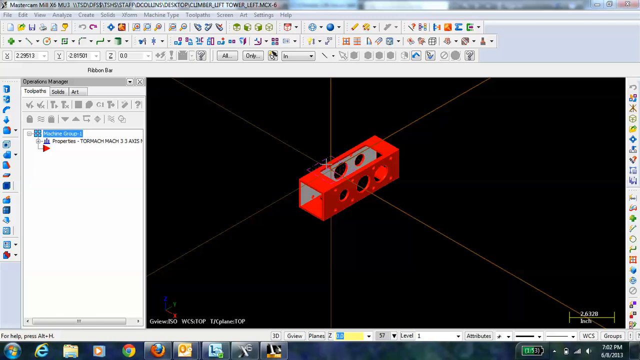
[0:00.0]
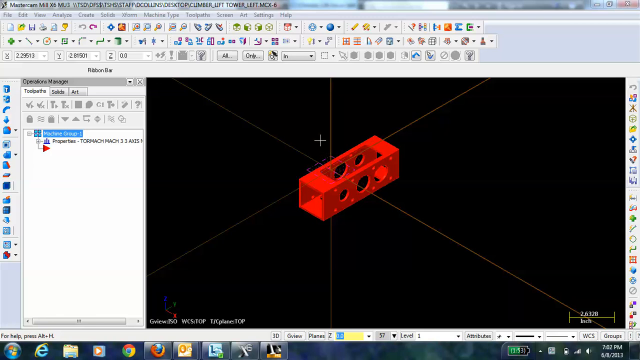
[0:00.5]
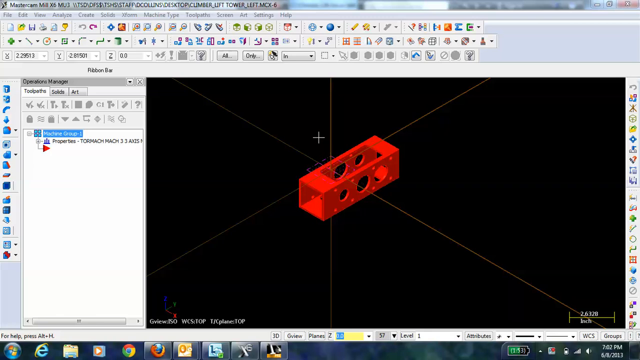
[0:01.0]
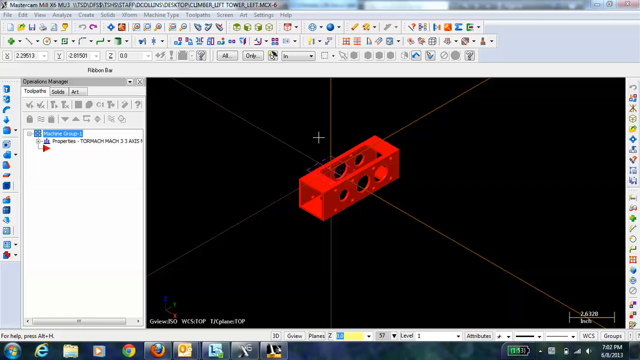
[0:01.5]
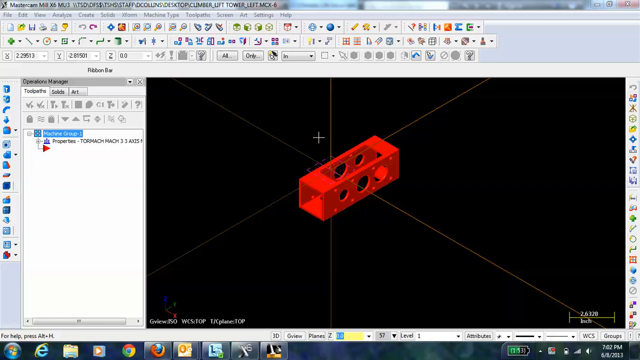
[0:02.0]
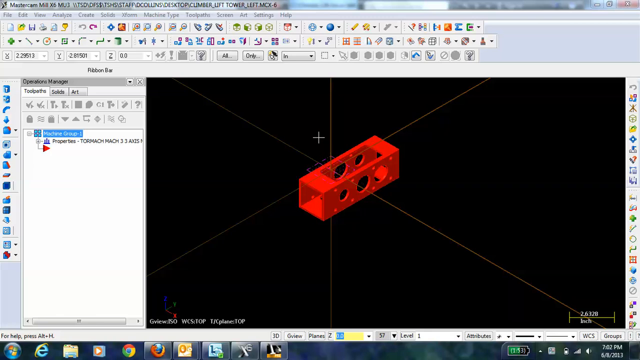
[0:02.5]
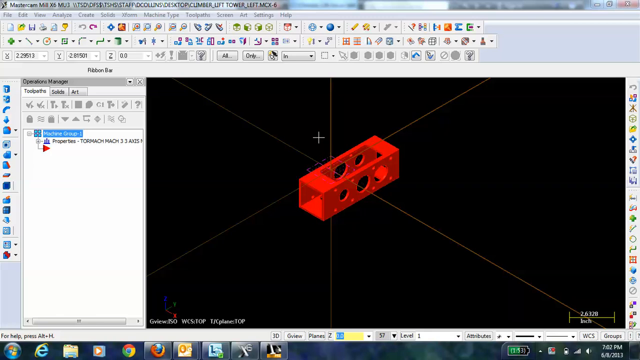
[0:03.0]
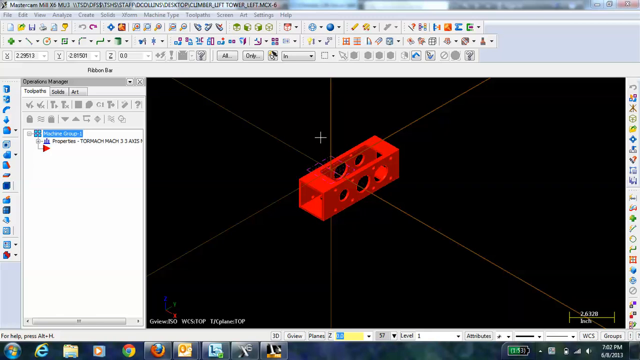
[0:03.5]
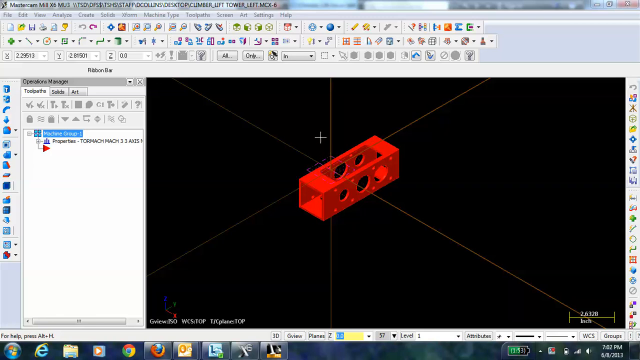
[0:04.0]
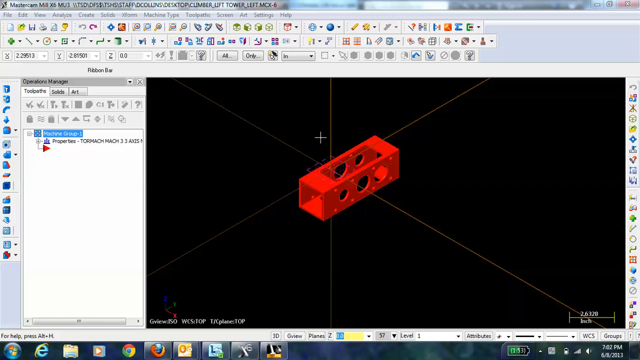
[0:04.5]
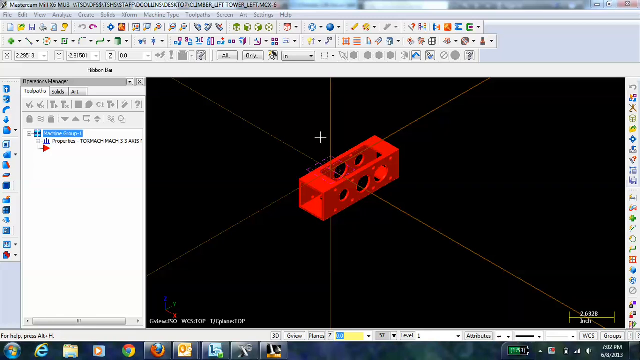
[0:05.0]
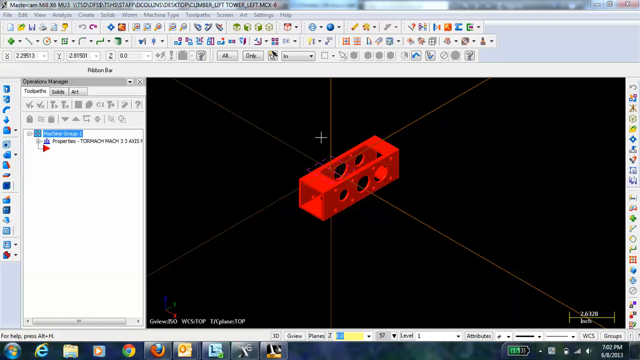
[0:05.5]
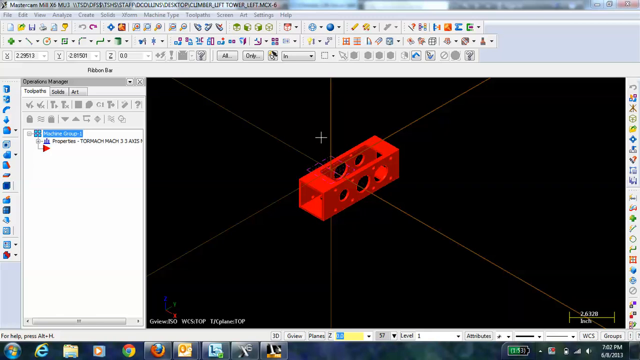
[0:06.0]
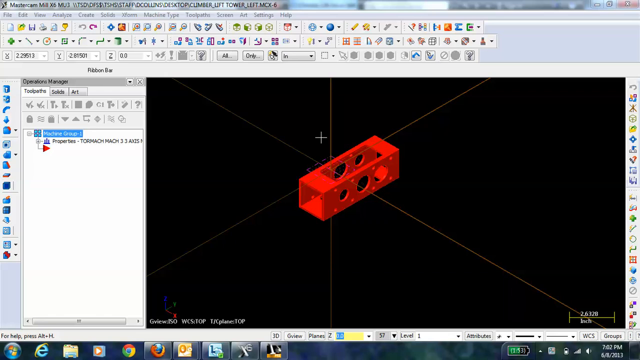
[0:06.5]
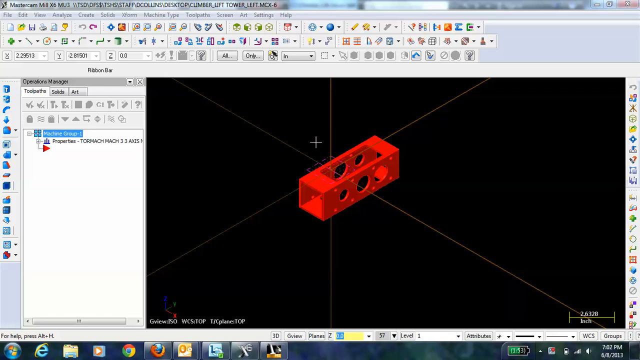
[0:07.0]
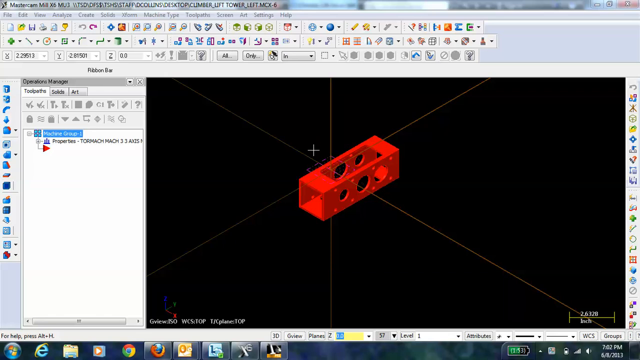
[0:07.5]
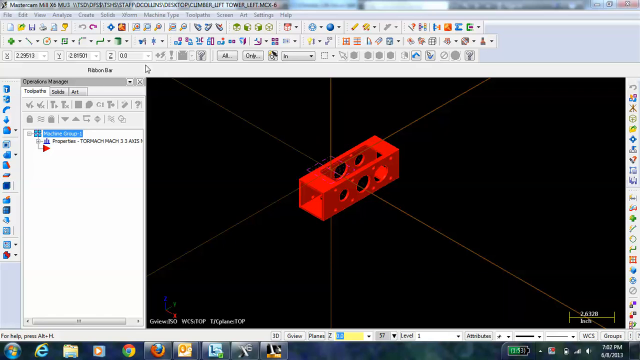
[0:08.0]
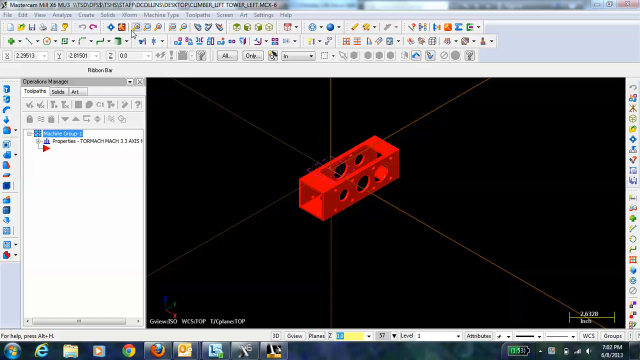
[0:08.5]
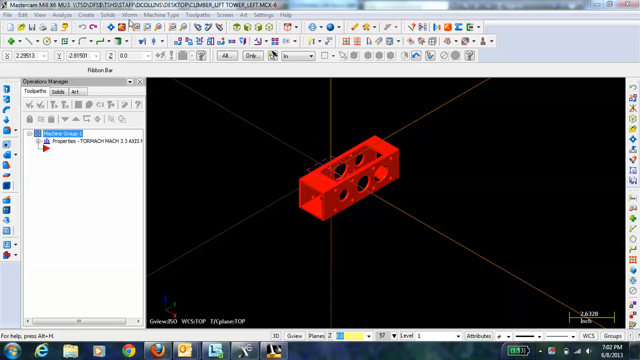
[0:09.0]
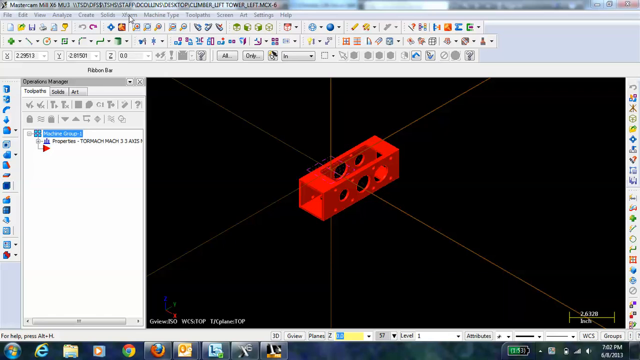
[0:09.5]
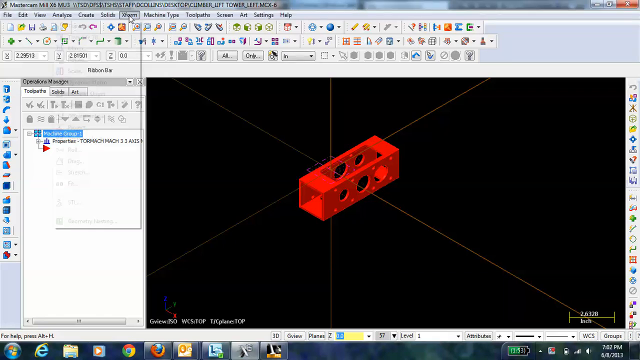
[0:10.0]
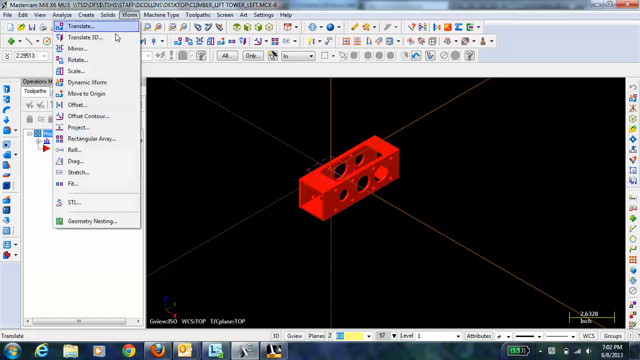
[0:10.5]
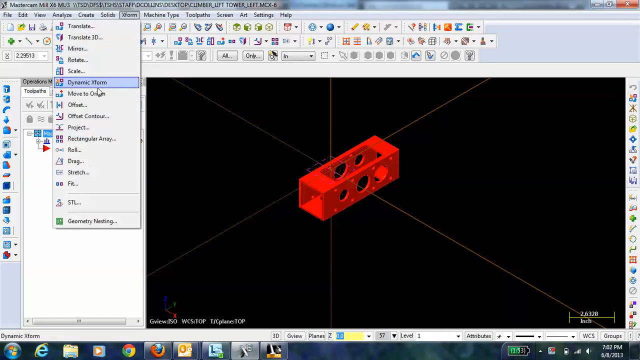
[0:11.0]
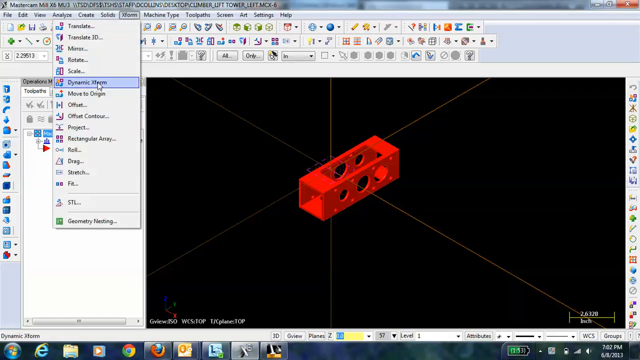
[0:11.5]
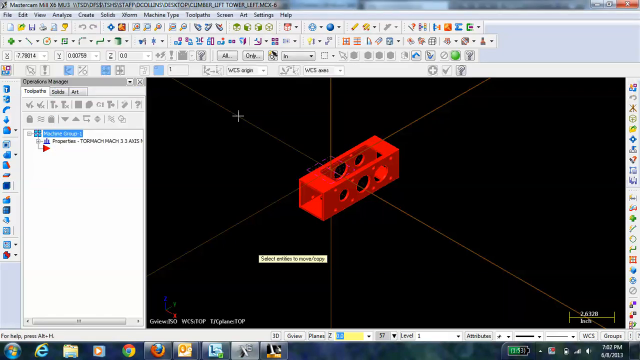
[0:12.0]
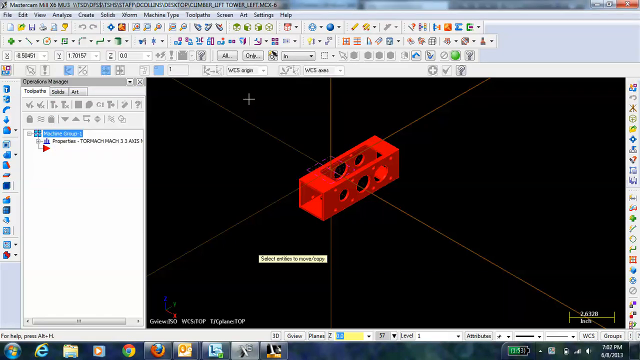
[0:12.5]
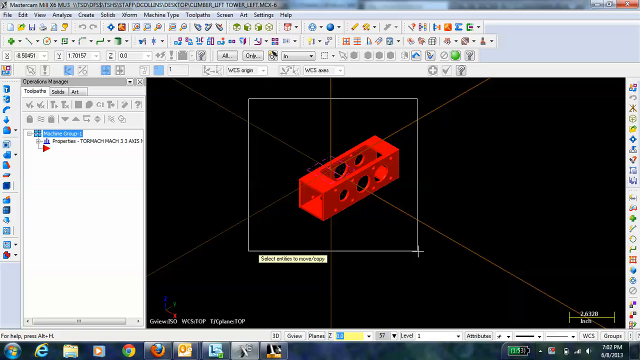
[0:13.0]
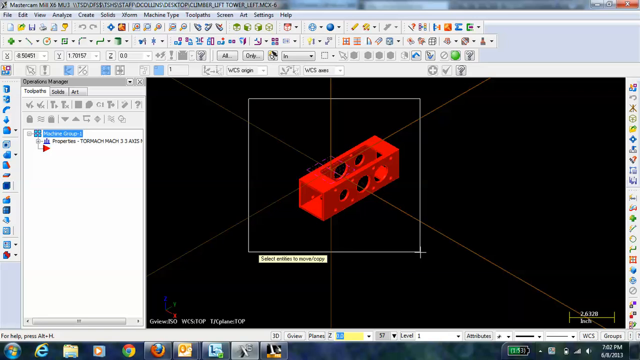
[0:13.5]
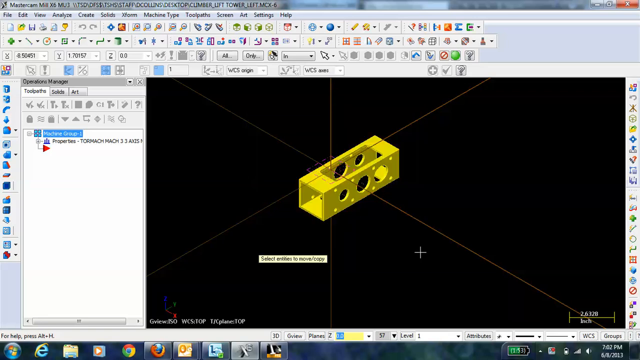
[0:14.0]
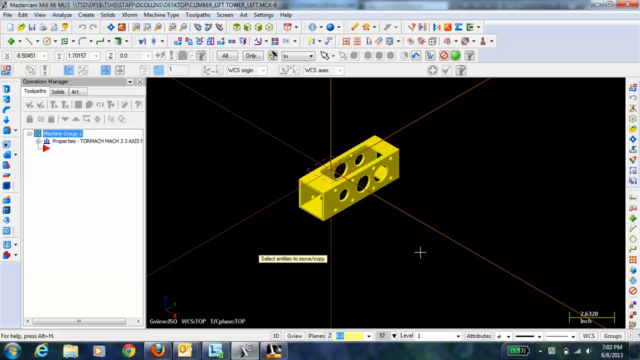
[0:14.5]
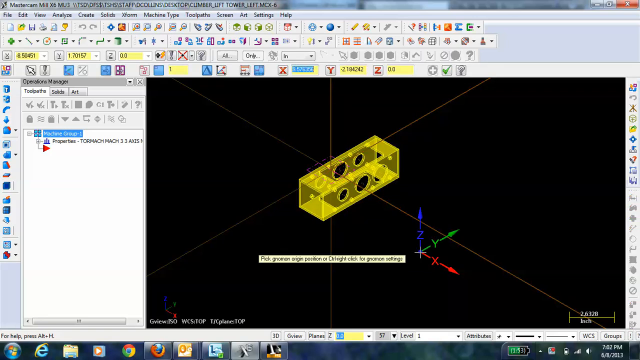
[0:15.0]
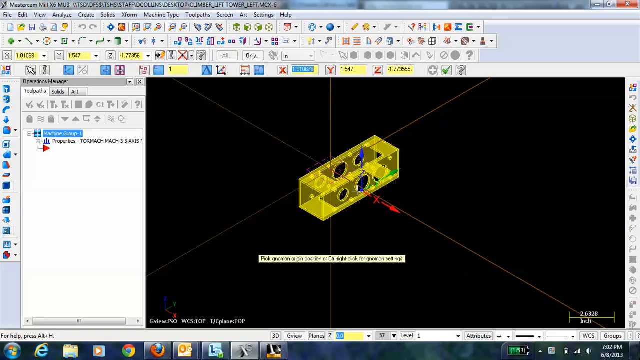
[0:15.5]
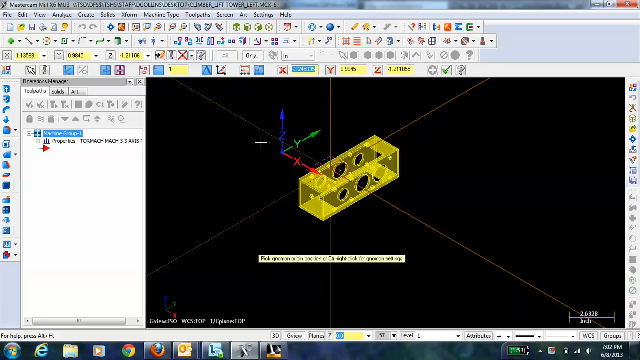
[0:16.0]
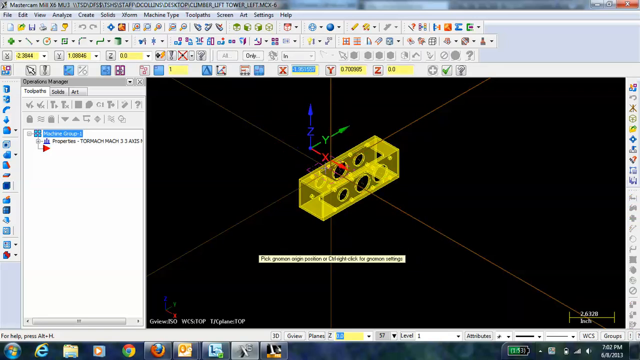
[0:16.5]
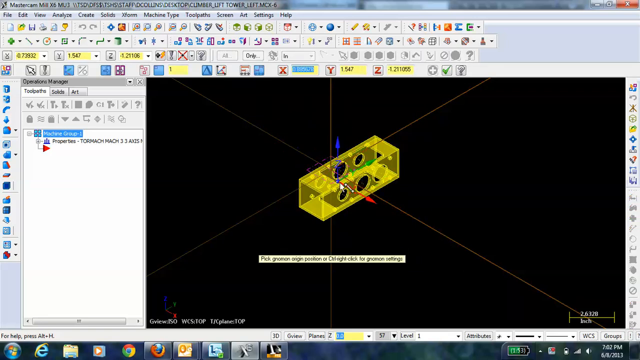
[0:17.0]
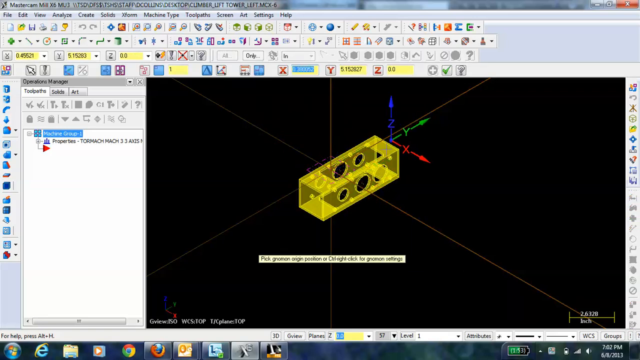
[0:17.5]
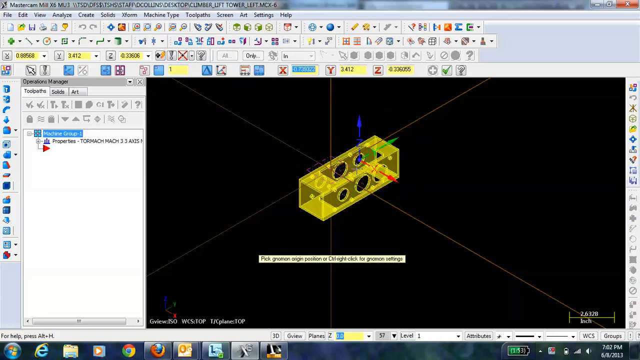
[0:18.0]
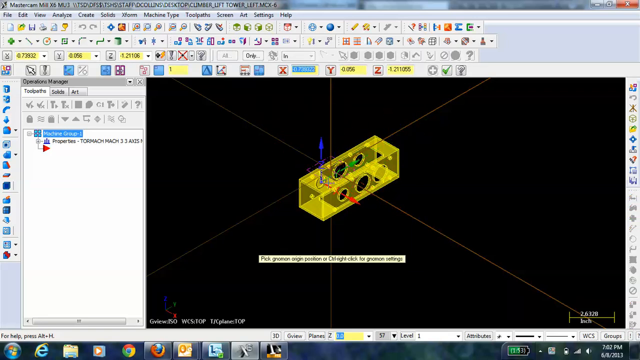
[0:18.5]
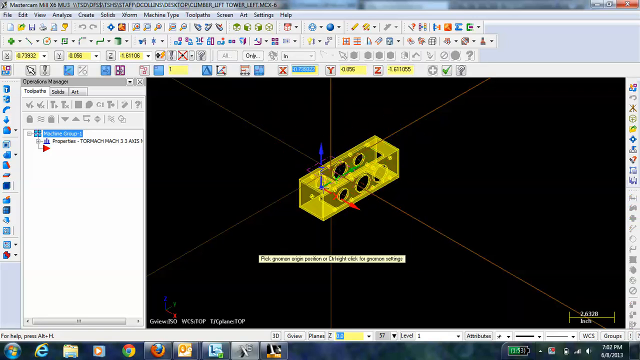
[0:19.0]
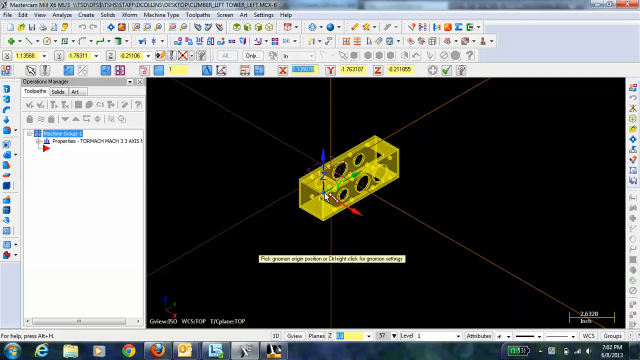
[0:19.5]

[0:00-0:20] A menu appears in what seems to be some kind of 3D program. A red rectangular box has three holes penetrating it; it is a hollow box, open on either end and open on two other sides, with the three holes on the sides that are not open. It is on a black background on an X, Y, Z axis. There are multiple tools. The user goes to "X form," apparently meaning transform, goes down to the dynamic transform option, and drags a box over the rectangular object, which turns it a translucent yellow color and brings up the X, Y, Z axis. He moves that axis onto the yellow box, moves it around a bit, and then clicks again. The menu has an operations manager with tabs for toolpaths, solids, and art. The toolpaths tab is selected, and underneath it are multiple grayed-out tools and something called Machine Orange 1, Properties, Tormach, Mach3, 3-axis.